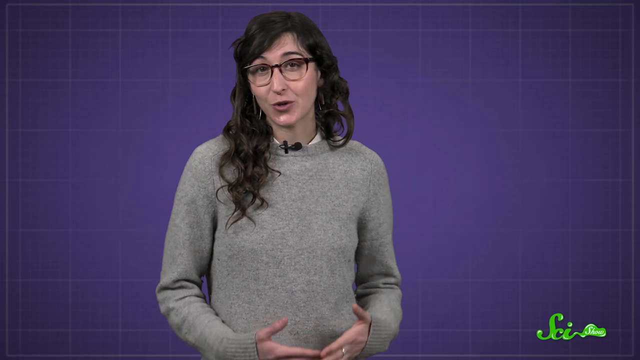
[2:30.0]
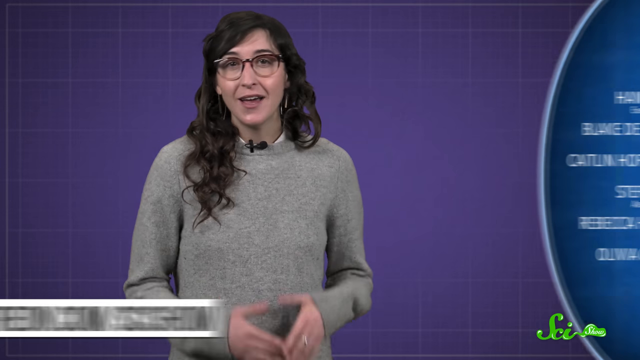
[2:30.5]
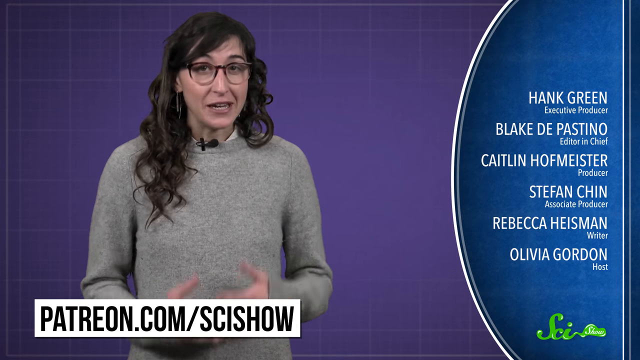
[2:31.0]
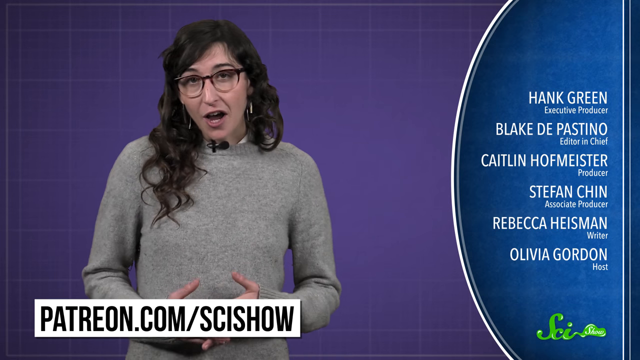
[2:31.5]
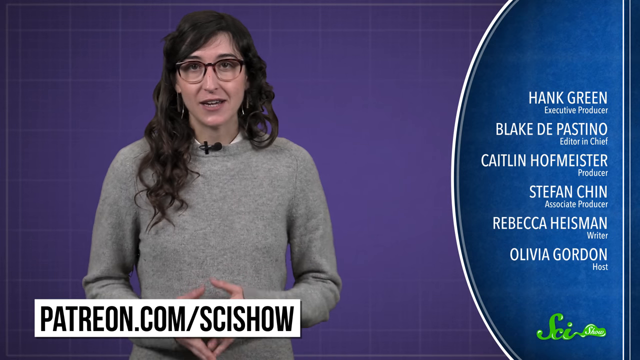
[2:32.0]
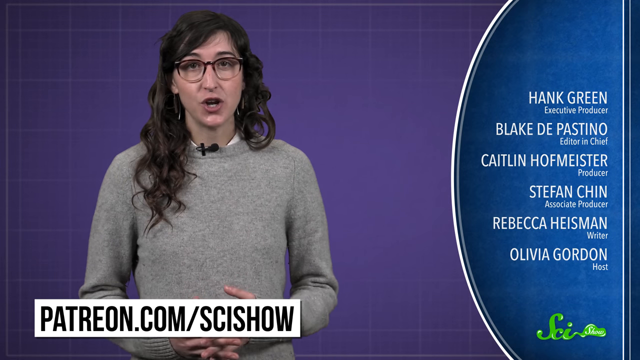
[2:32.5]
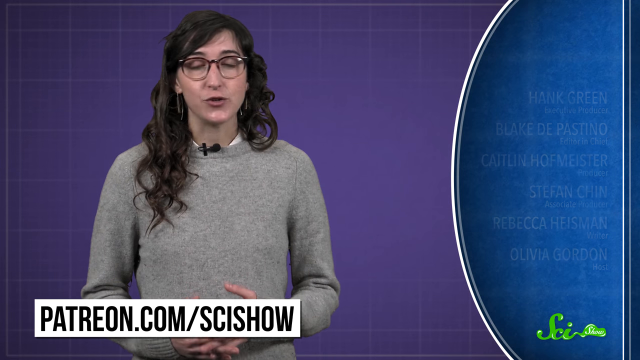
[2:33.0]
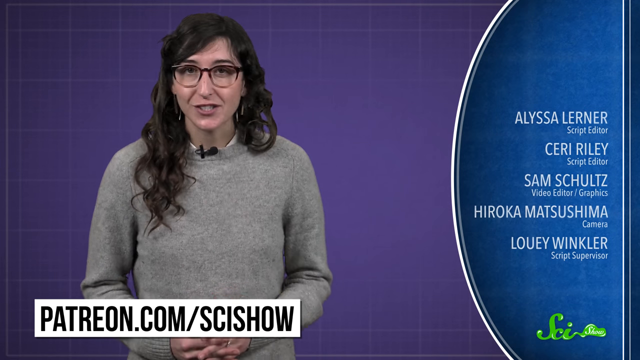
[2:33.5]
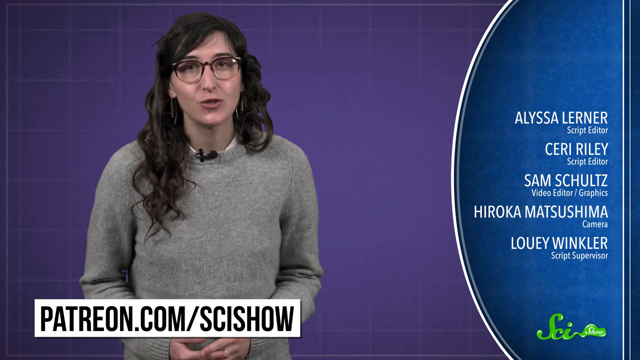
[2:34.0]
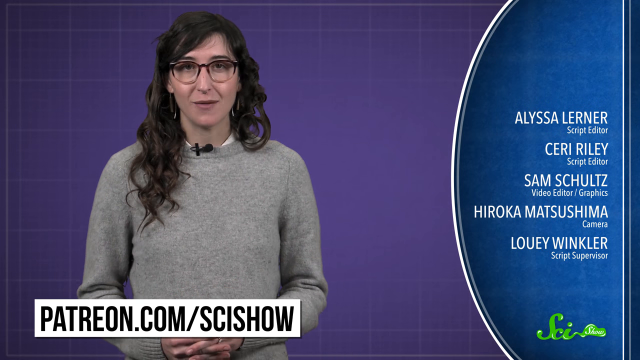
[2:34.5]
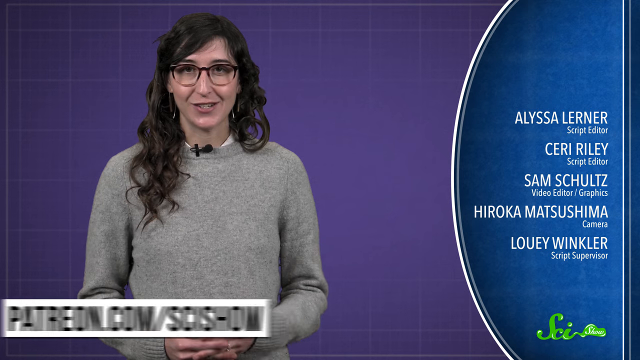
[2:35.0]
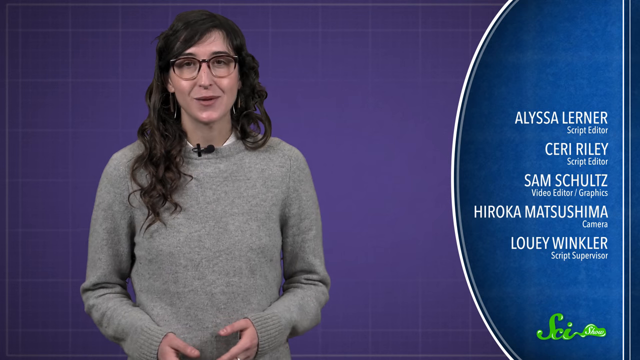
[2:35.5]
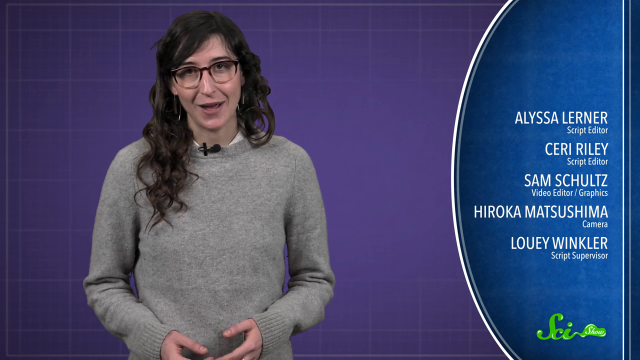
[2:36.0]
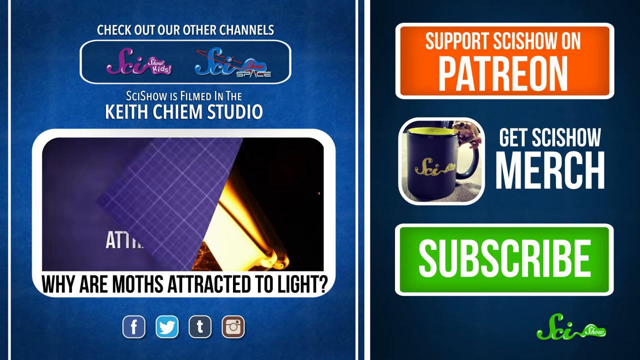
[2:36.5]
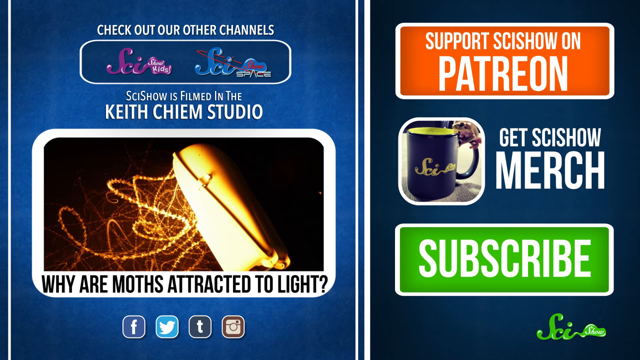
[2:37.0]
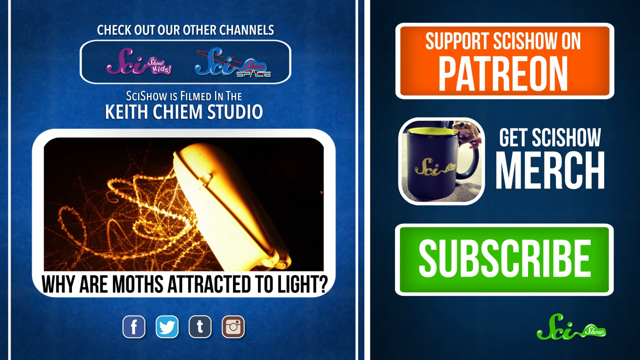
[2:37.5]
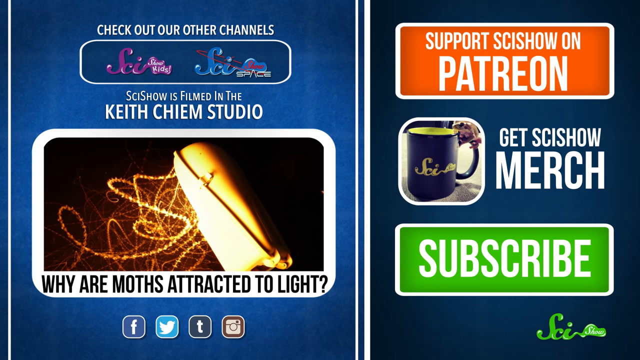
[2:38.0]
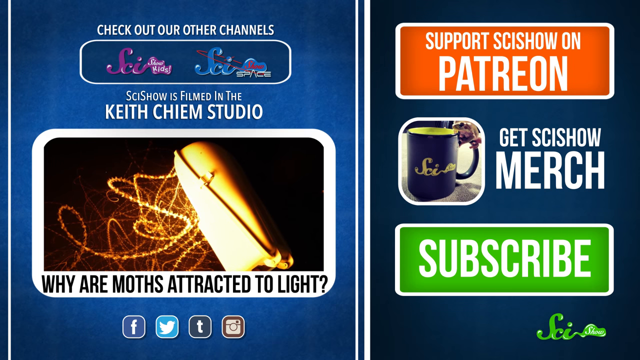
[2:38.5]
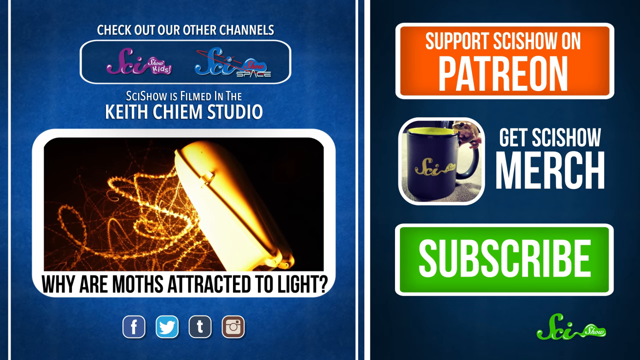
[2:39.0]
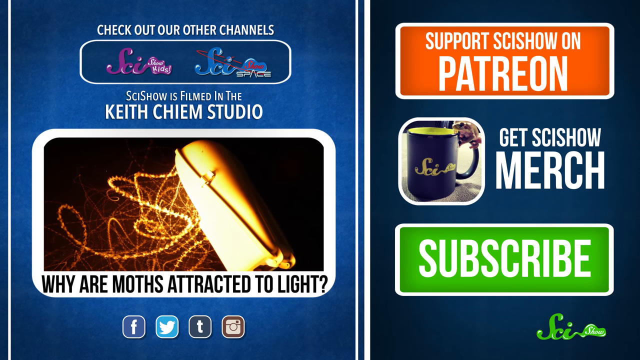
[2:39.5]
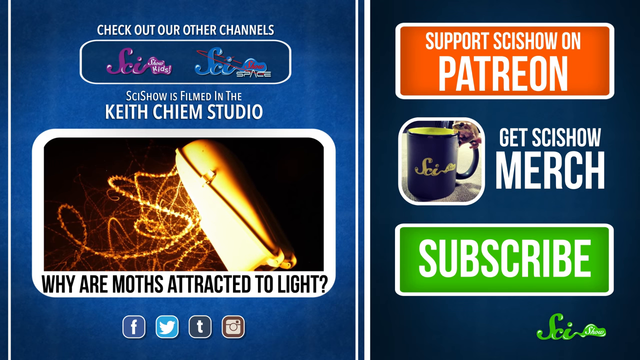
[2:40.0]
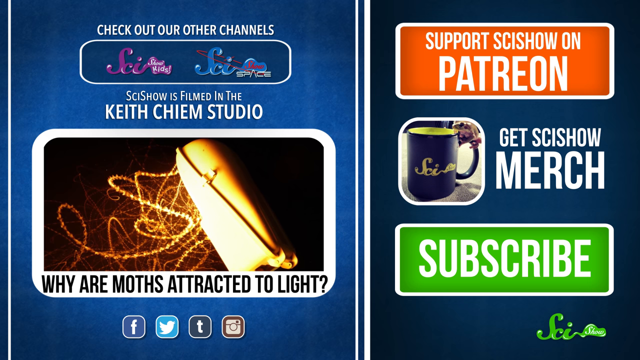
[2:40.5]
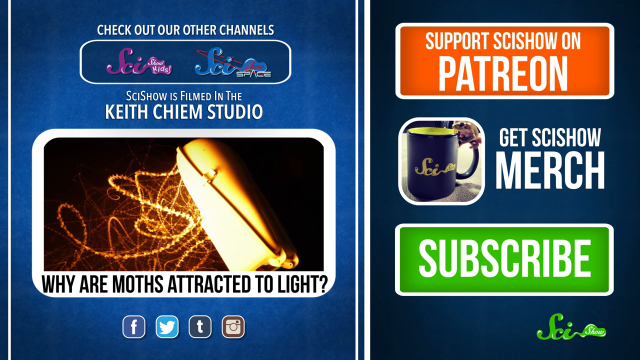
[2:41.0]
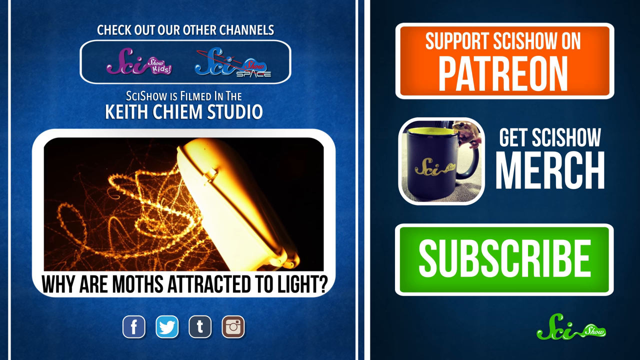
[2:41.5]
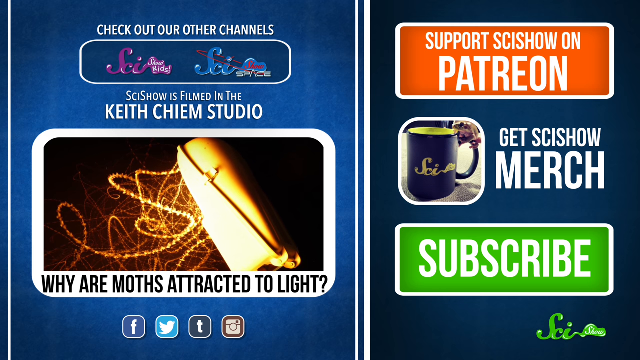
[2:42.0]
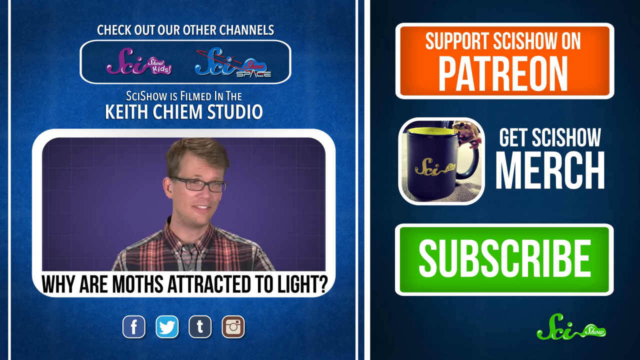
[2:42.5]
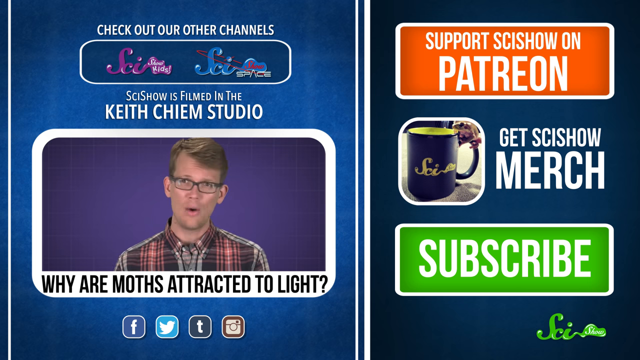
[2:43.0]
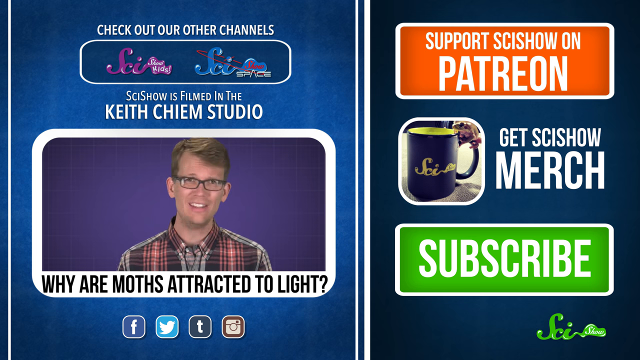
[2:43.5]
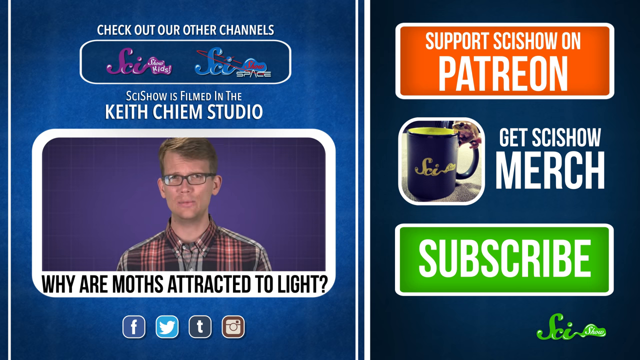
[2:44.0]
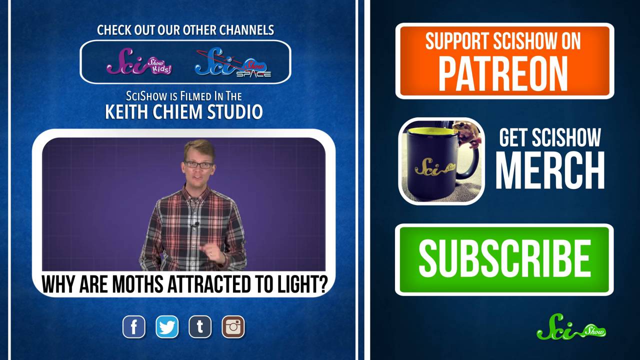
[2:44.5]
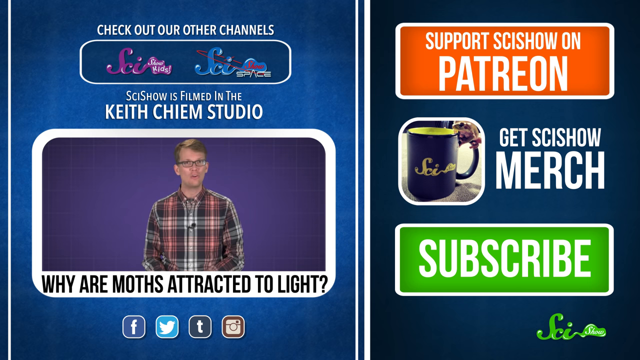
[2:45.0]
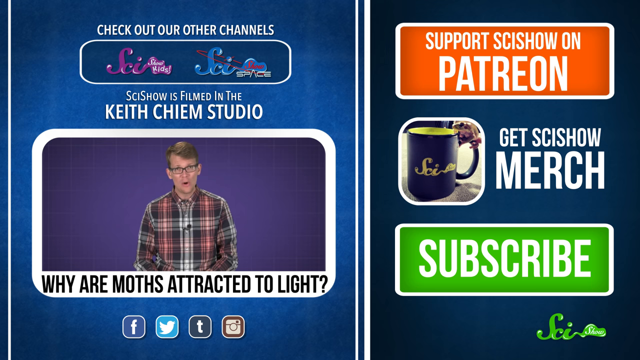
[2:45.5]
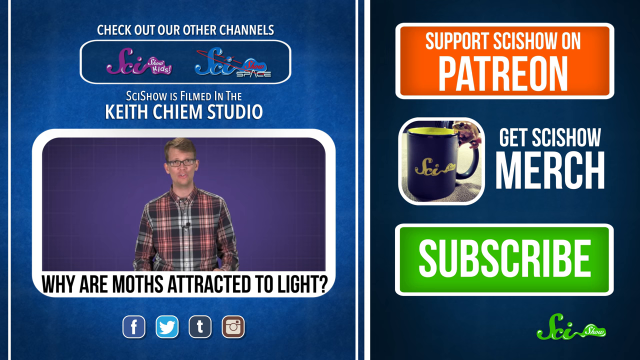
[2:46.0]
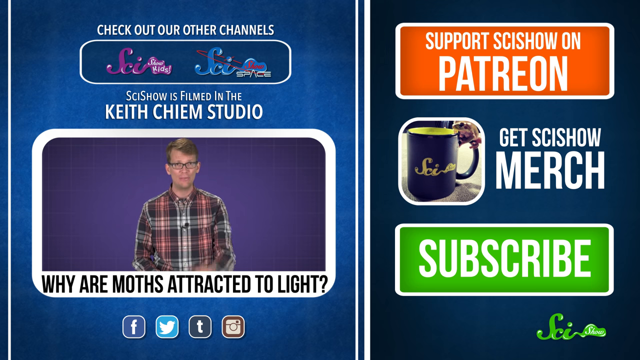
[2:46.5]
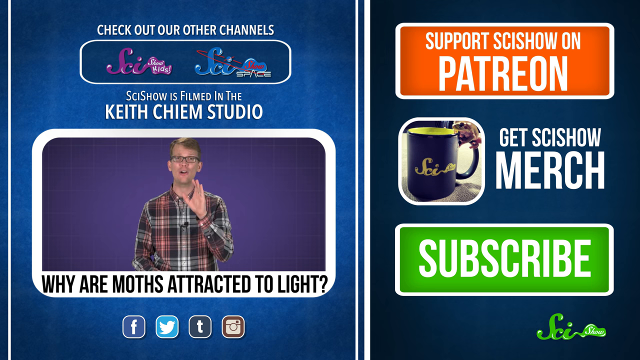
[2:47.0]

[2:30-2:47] The woman is still talking. Her long dark hair is a little bit curly, her glasses look darker on the top, and she has brown eyes. She wears a white shirt under a long-sleeved tan sweater, with the microphone attached to the sweater collar. End credits appear: "patreon.com" and "SciShow", with Hank Green as executive producer, Blake de pastino as editor-in-chief, Caitlin Hoffmeister as producer, Stefan Chin as associate producer, Rebecca Heisman as writer, and Olivia Gordon as host, the woman shown throughout. She keeps talking as more credits appear on the right-hand side, over a blue grid with a large circle, only partly visible, that is blue with a gray and white outline: Alyssa Lerner and Siri Riley as script editors, Sam Schultz as video editor and graphics, Hiroka macho Mishima on camera, and Louie Winkler as script supervisor. The screen then points to other channels, with one question reading "why are moths attracted to light?"